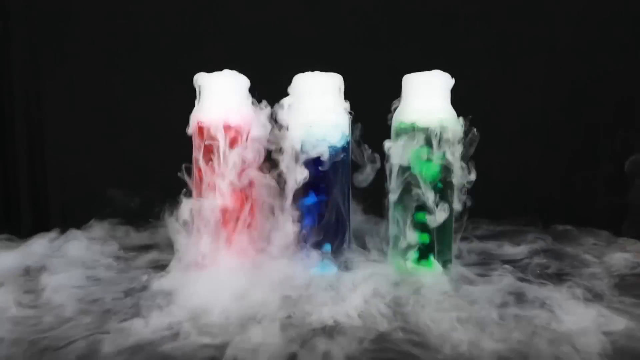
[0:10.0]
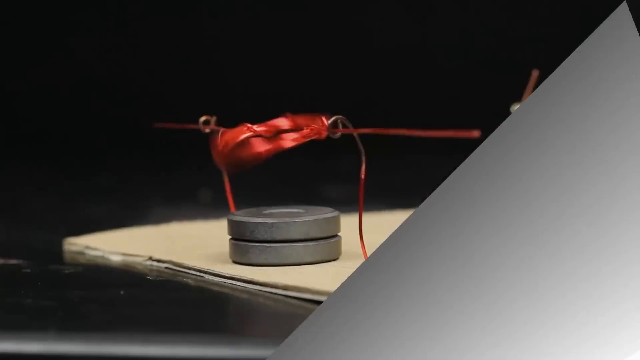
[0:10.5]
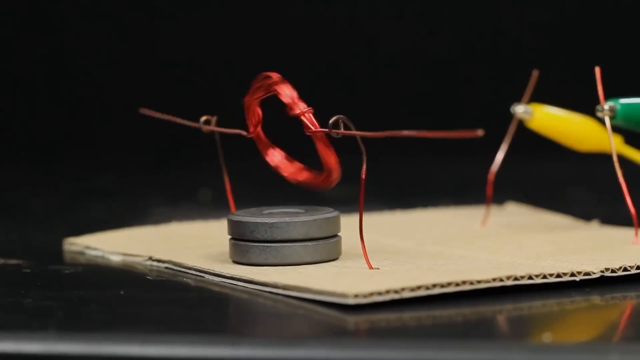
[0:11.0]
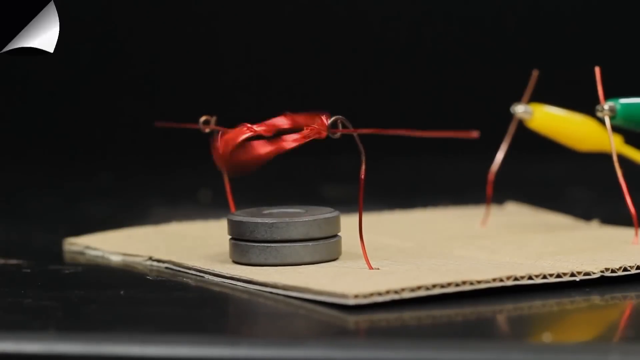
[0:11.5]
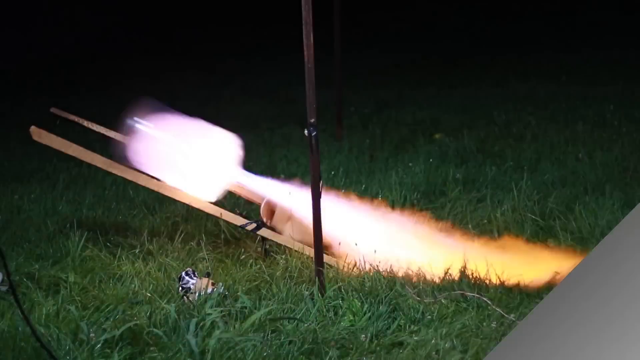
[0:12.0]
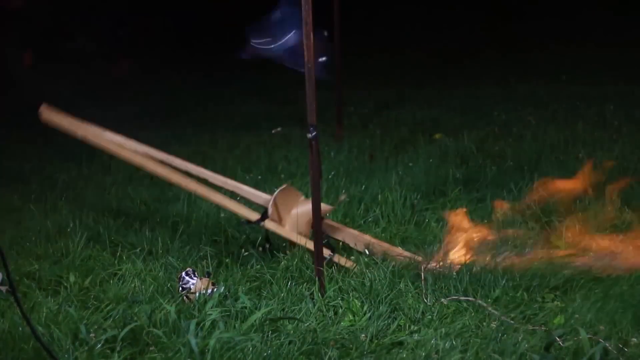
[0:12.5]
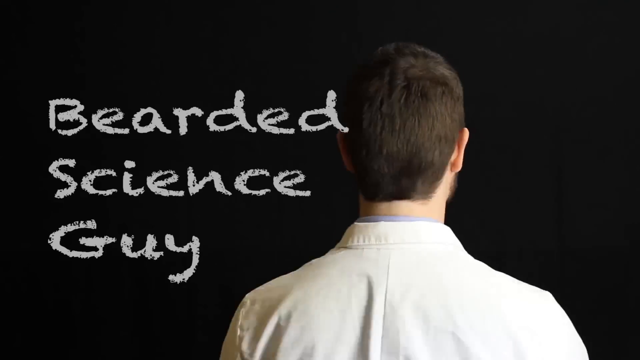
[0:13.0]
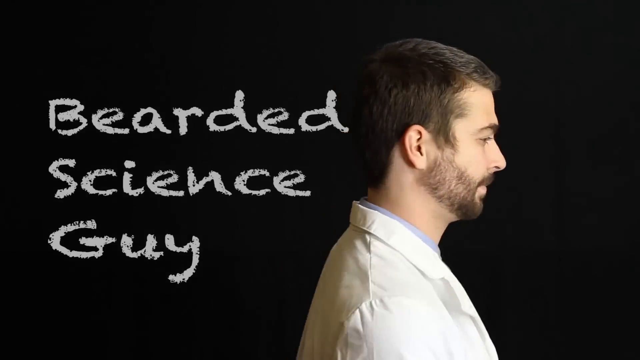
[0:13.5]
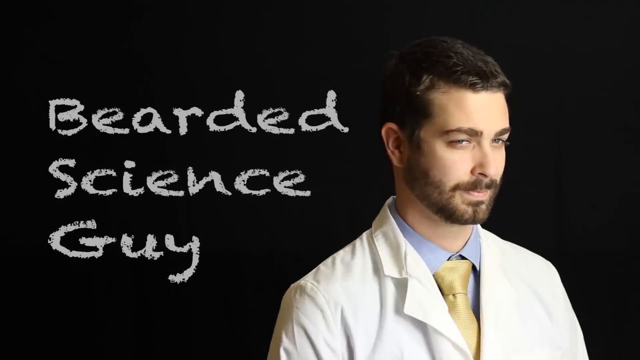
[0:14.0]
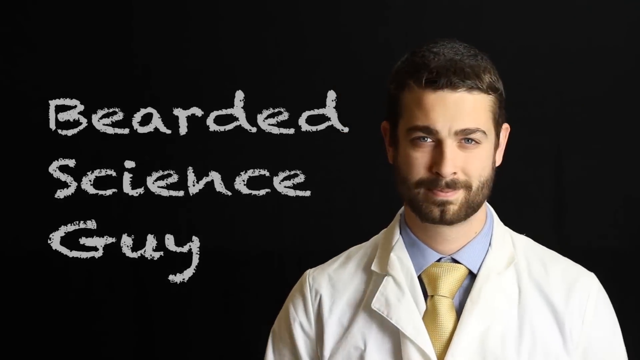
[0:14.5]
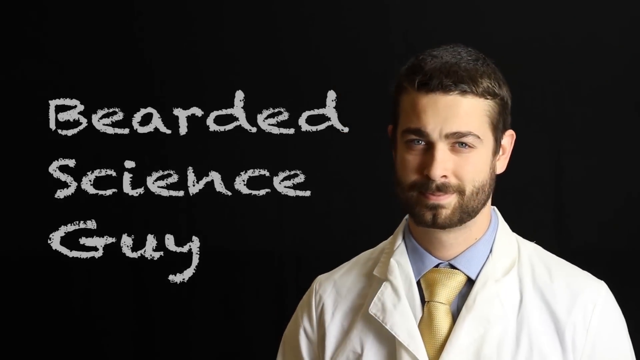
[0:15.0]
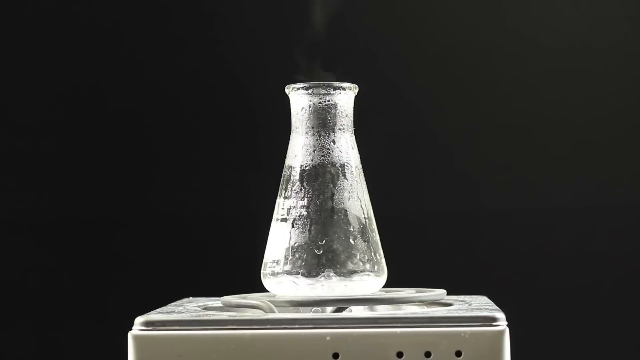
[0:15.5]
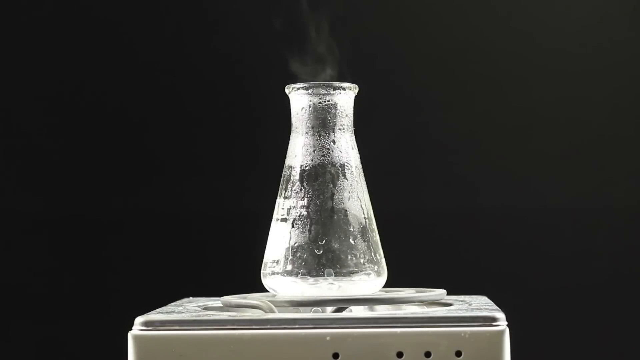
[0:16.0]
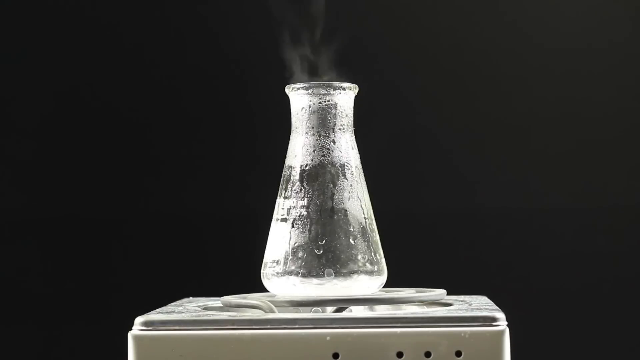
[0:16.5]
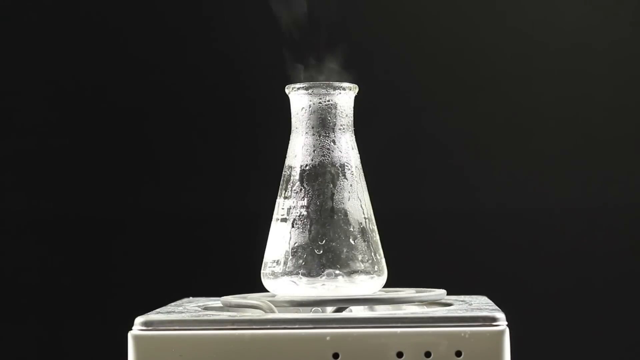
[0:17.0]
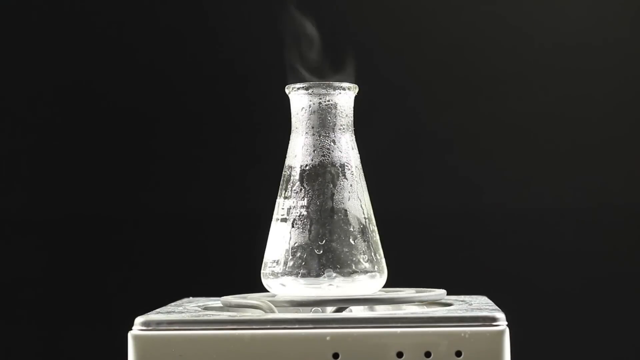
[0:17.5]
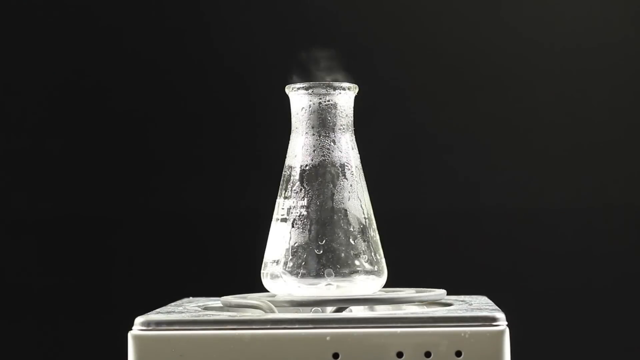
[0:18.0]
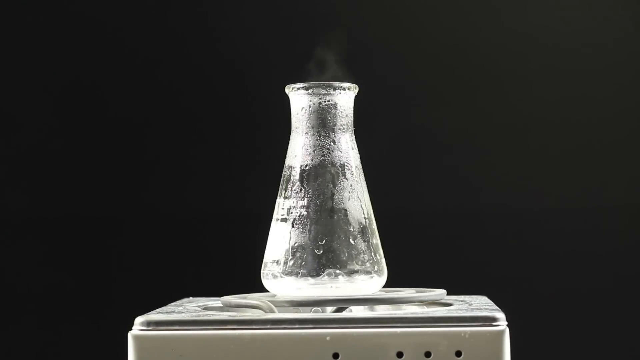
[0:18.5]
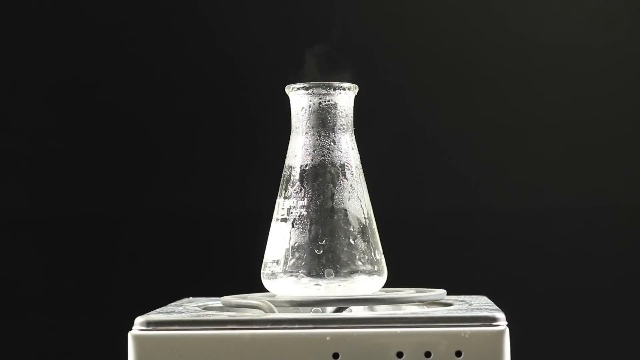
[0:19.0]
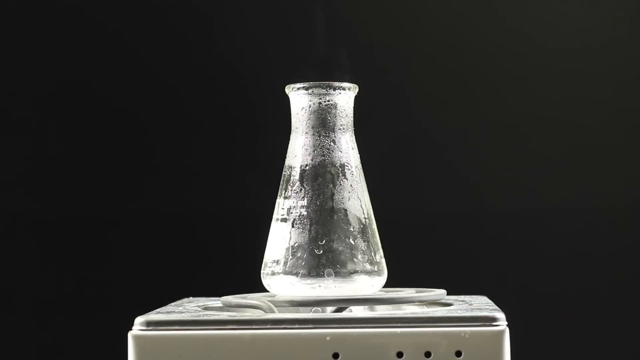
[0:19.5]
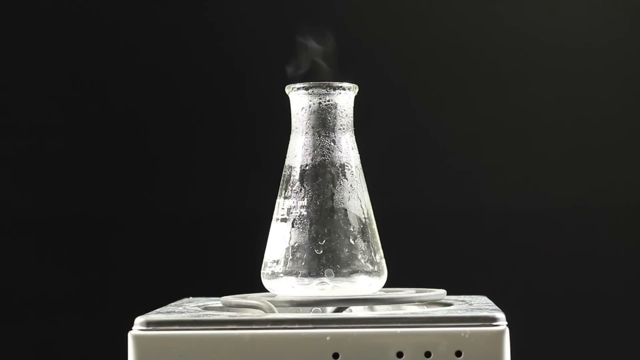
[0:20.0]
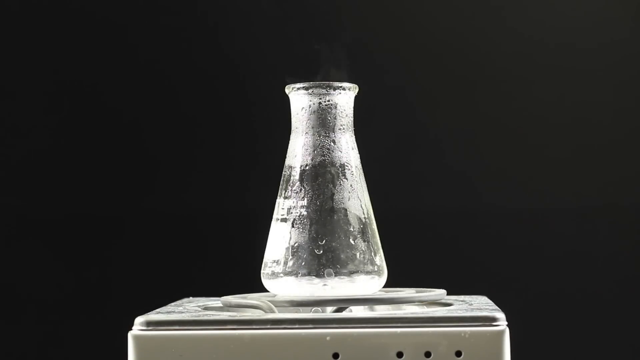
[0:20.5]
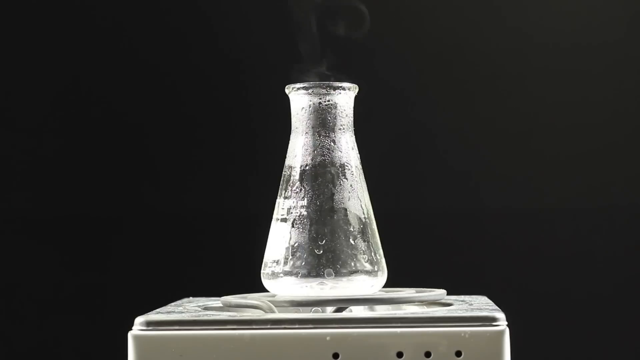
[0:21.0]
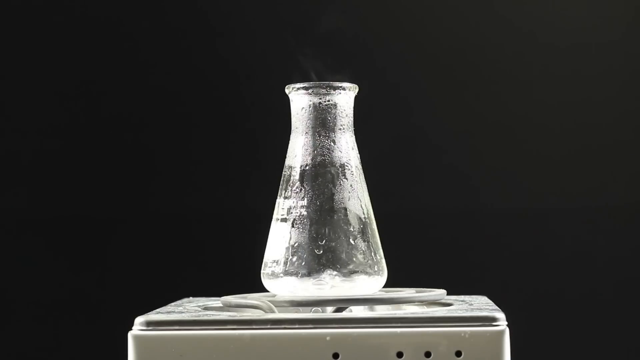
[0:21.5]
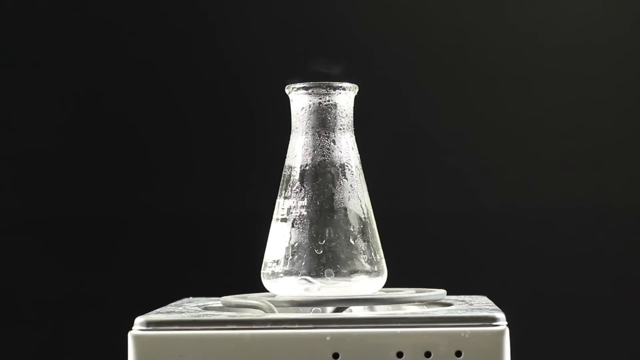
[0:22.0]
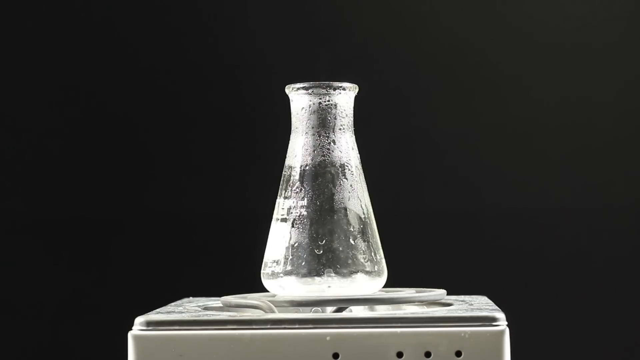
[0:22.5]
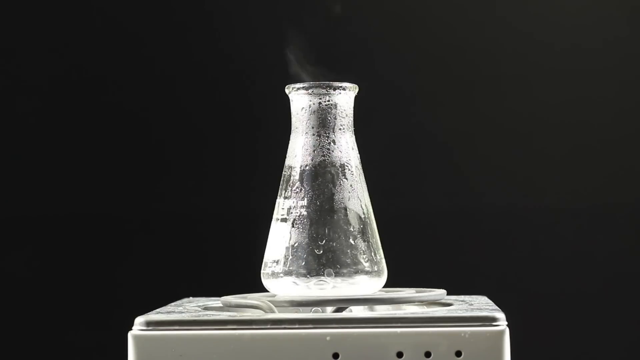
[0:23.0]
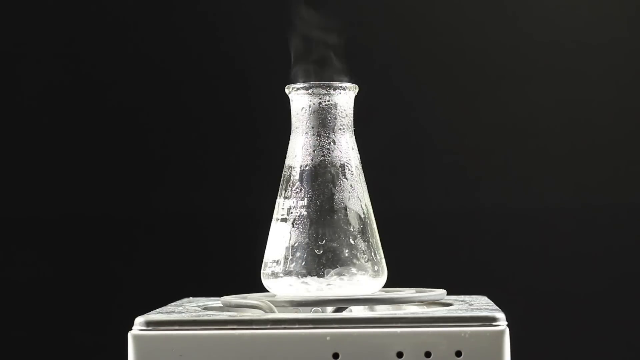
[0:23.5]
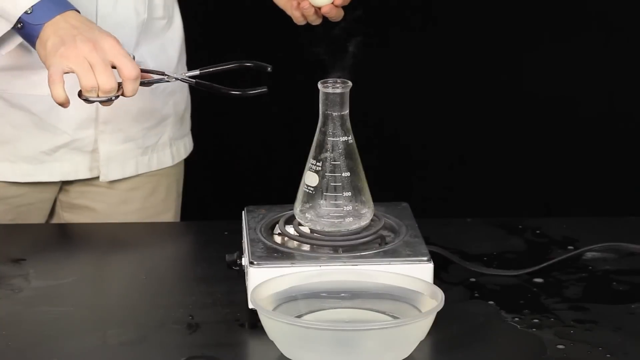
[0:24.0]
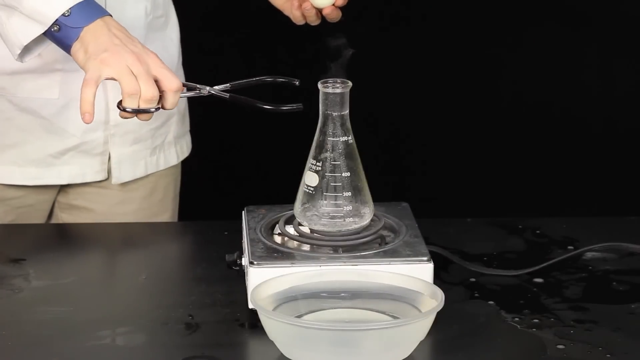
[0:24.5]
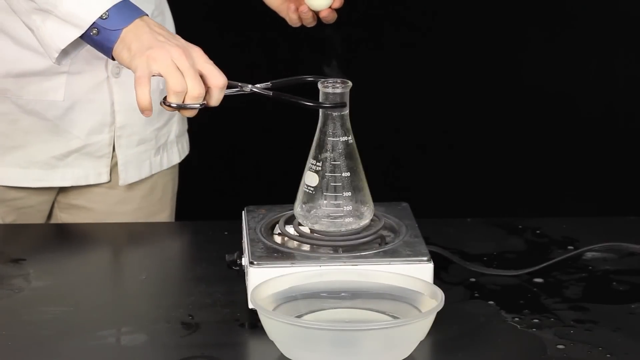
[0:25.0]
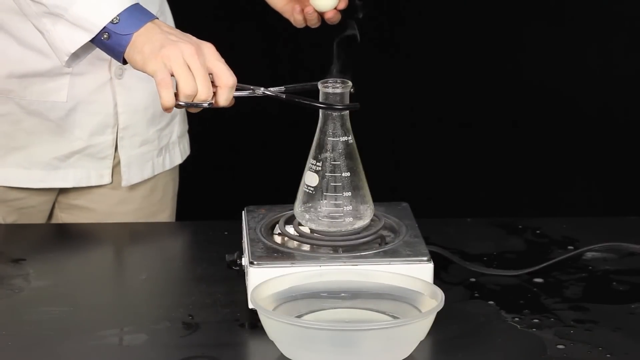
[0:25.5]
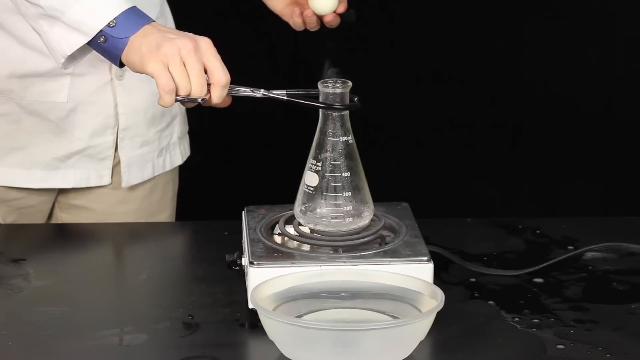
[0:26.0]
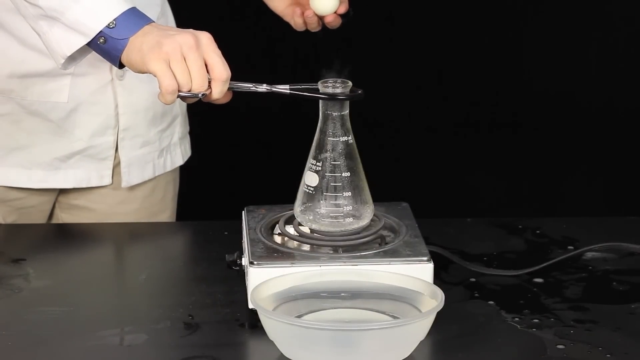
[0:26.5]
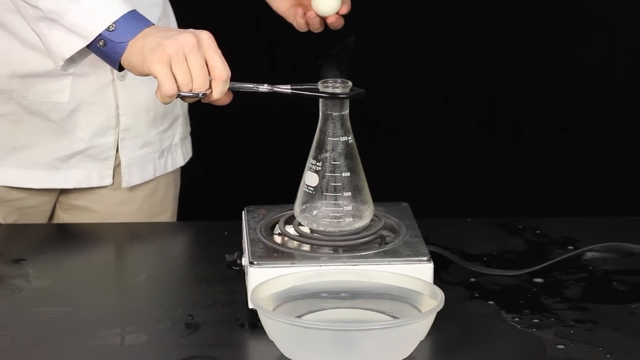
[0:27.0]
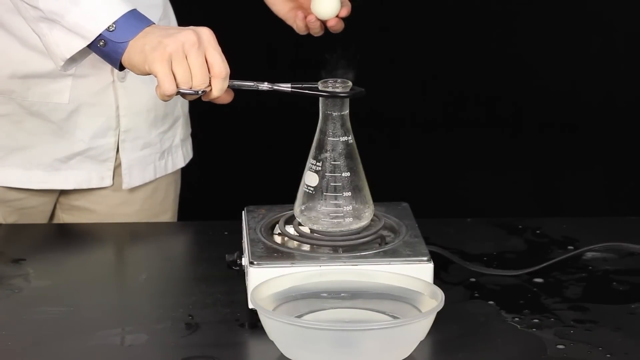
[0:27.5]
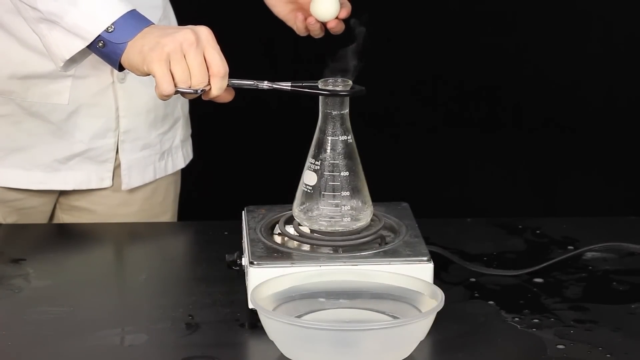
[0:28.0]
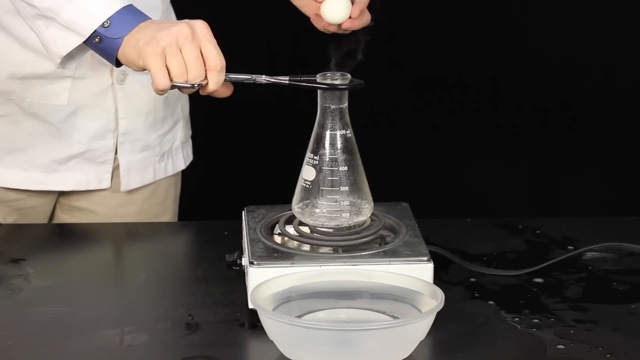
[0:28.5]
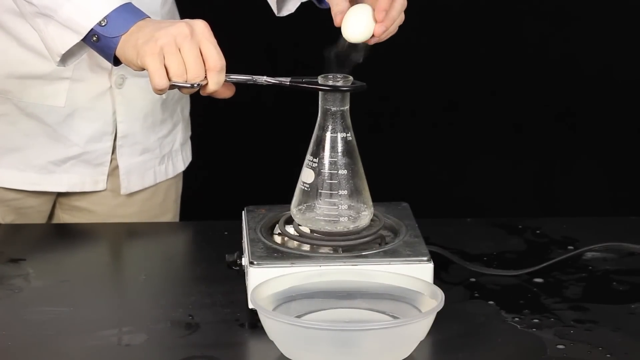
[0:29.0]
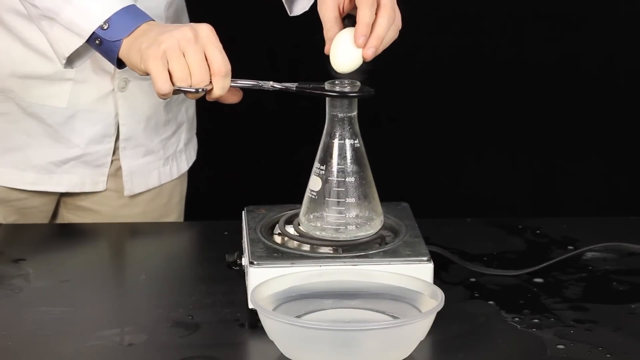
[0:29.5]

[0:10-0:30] Three vials of liquid bubble: the one on the left is red, the liquid in the middle one is blue, and the liquid on the right is green. Smoke issues from their tops as they continue to bubble. The images then switch rapidly. First, a red circle of wire is suspended on two wire legs above a double magnet sitting on top of a piece of cardboard; the magnet causes the wire to spin rapidly in circles. Behind it, two clamps hold copper wire, the left one yellow and the right one green. Next, a homemade rocket launches, flying off to the left in a cloud of yellow and white smoke, with a cloud of yellow and white smoke on the ground behind it. The scene then switches to a blackboard drawing that says "Bearded Science Guy" on the left. On the right, a man in a white lab coat, pale blue shirt and gold tie appears and moves around to face the camera. He has short dark hair, dark eyebrows, a mustache and a beard. Then a glass beaker, narrower at the top and wider at the bottom, bubbles on a burner. The man clasps the beaker with tongs and puts an egg on the top.